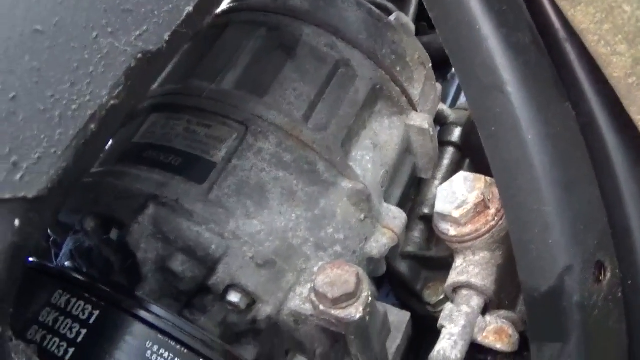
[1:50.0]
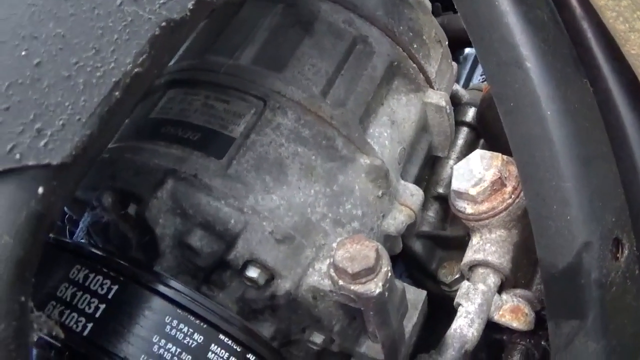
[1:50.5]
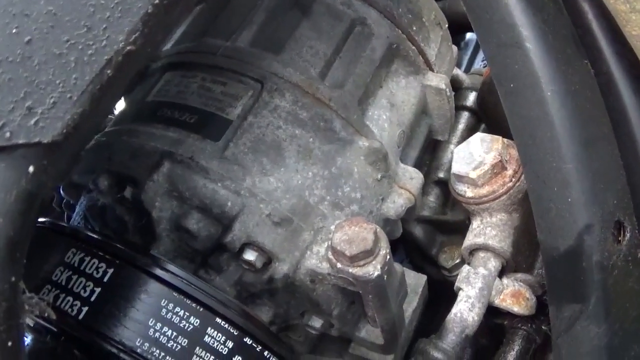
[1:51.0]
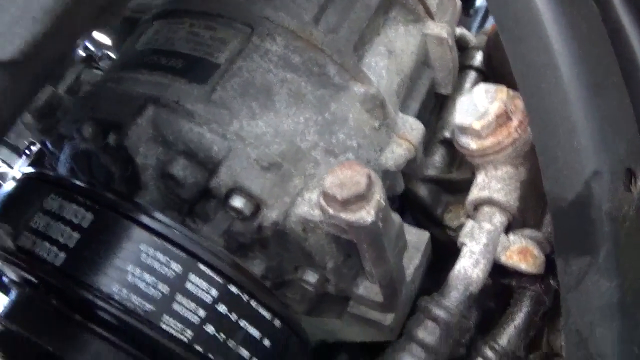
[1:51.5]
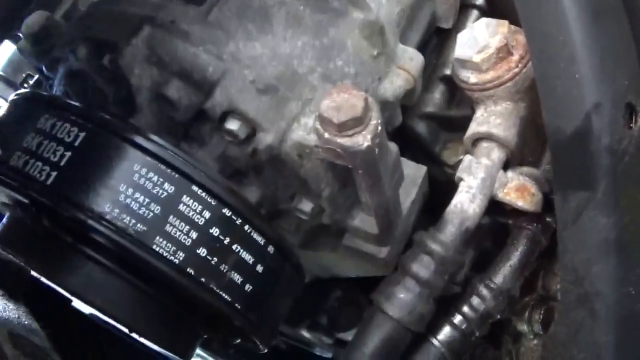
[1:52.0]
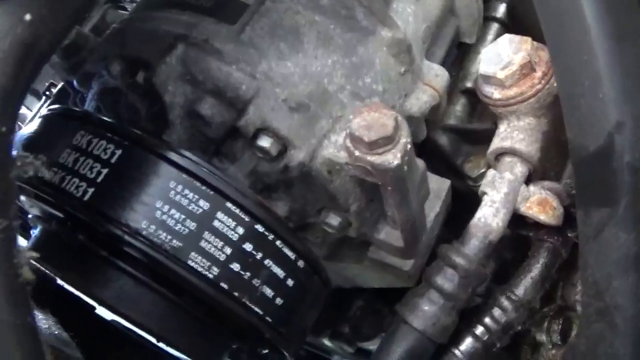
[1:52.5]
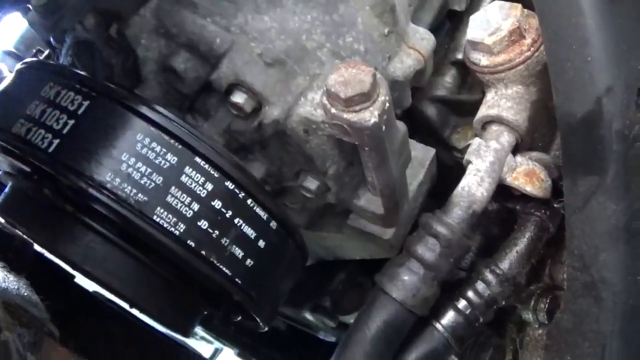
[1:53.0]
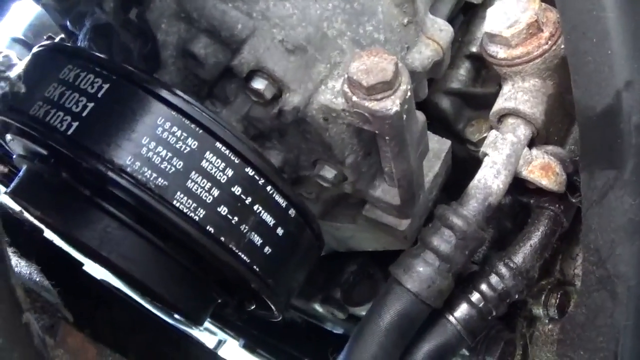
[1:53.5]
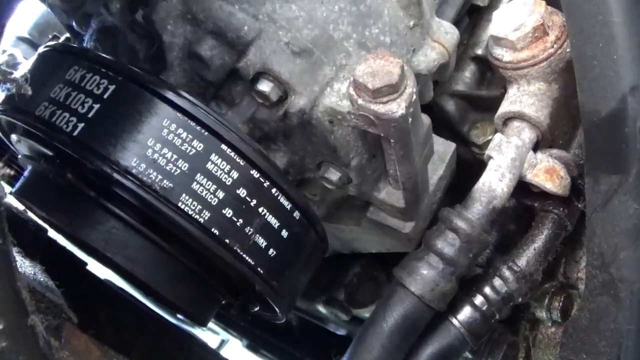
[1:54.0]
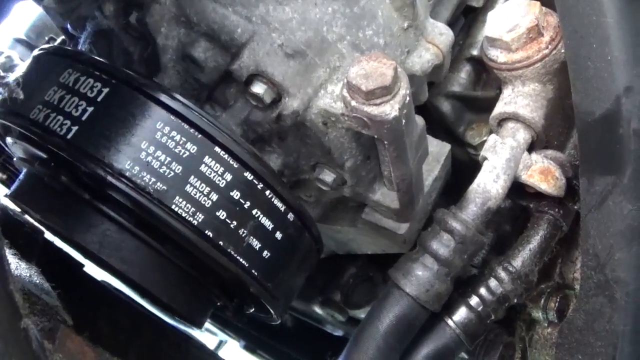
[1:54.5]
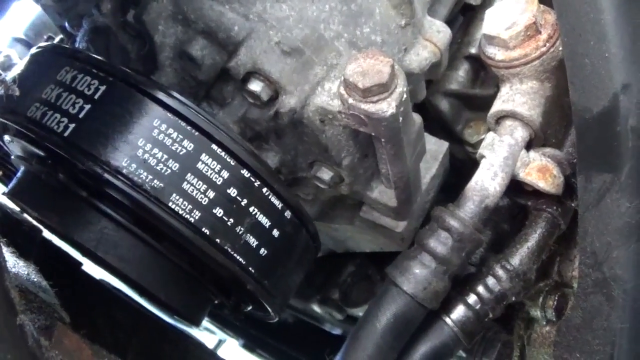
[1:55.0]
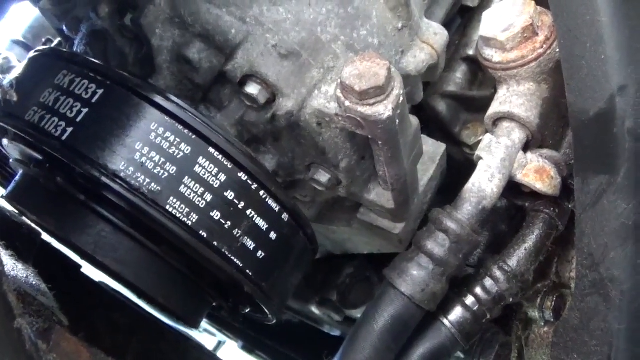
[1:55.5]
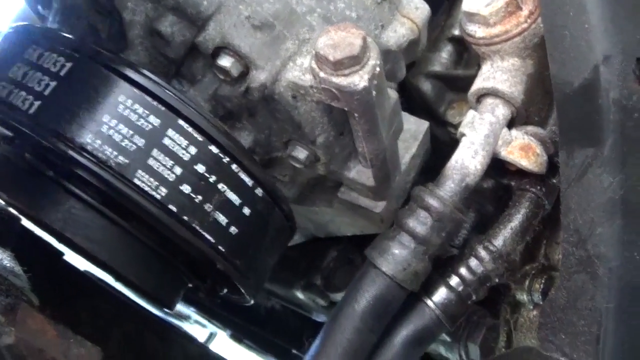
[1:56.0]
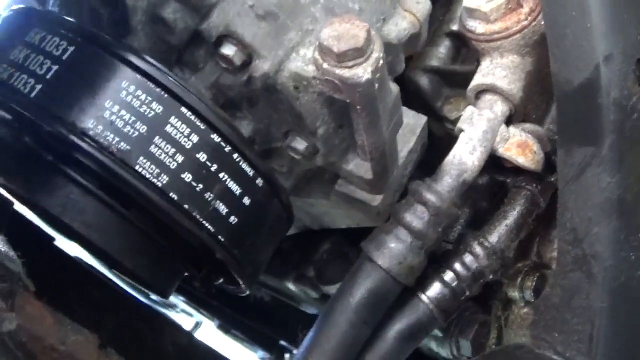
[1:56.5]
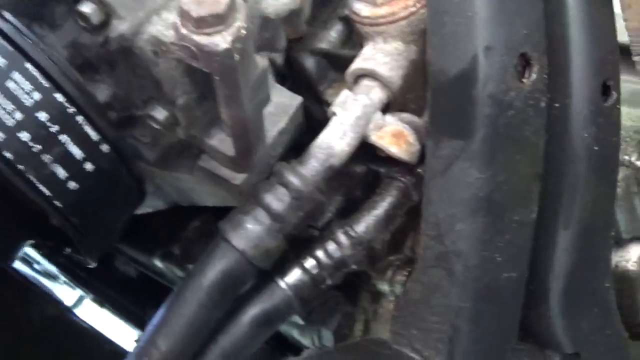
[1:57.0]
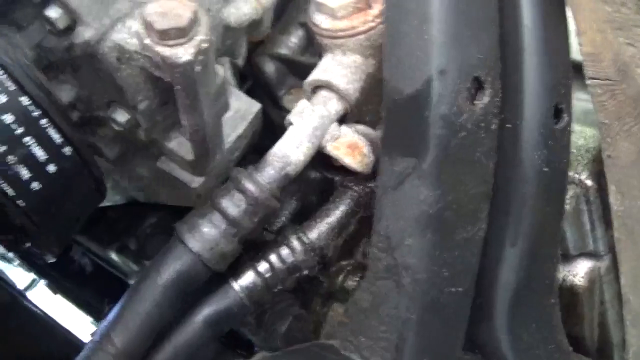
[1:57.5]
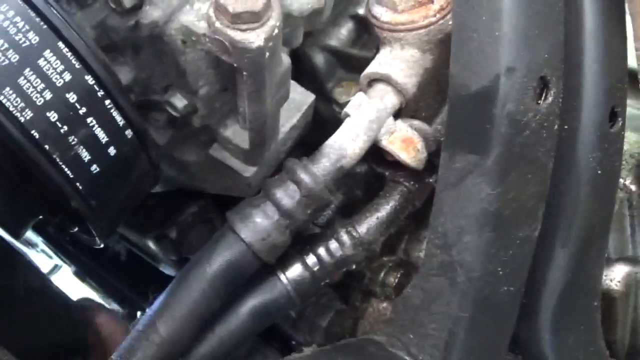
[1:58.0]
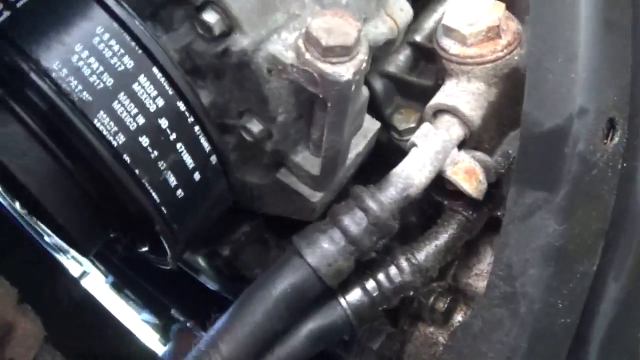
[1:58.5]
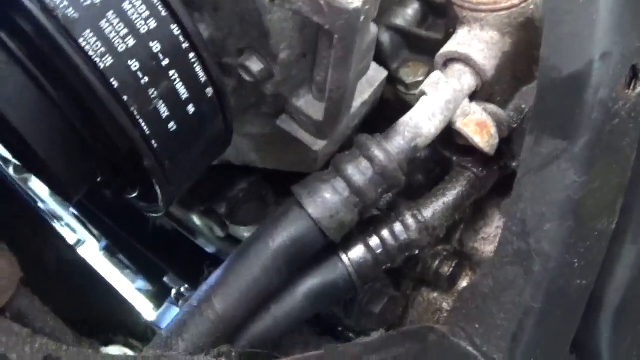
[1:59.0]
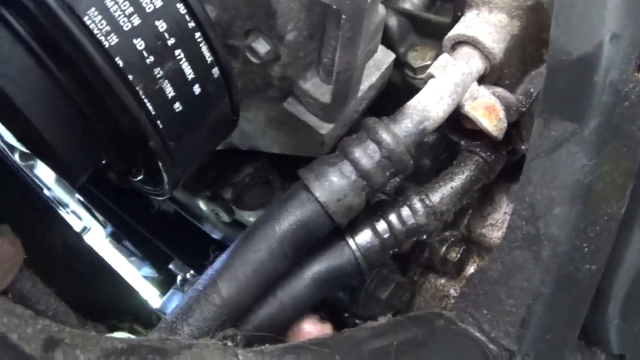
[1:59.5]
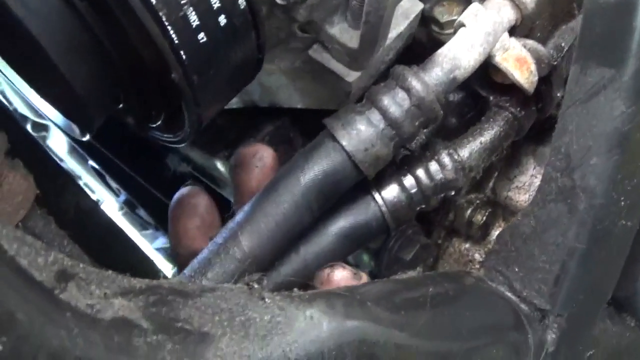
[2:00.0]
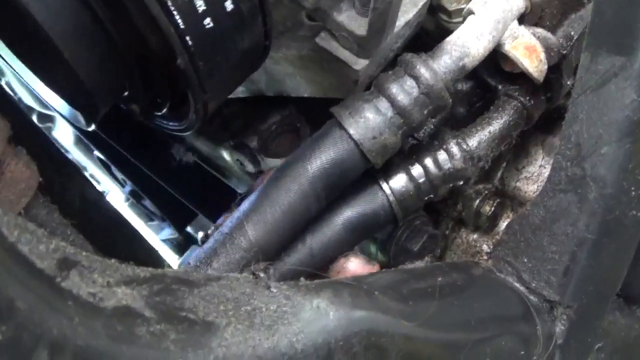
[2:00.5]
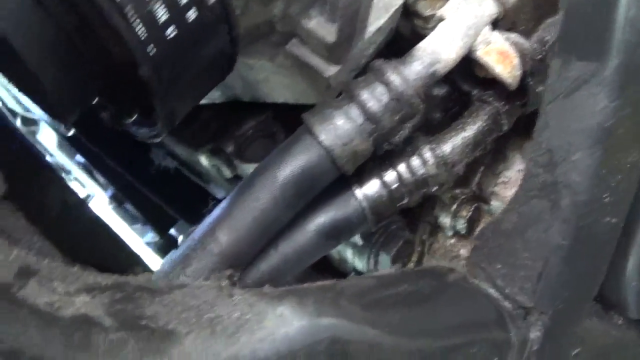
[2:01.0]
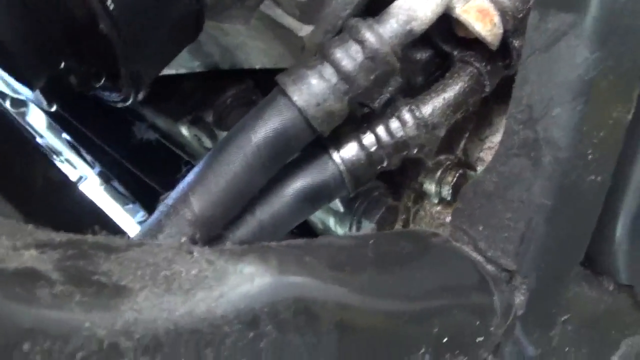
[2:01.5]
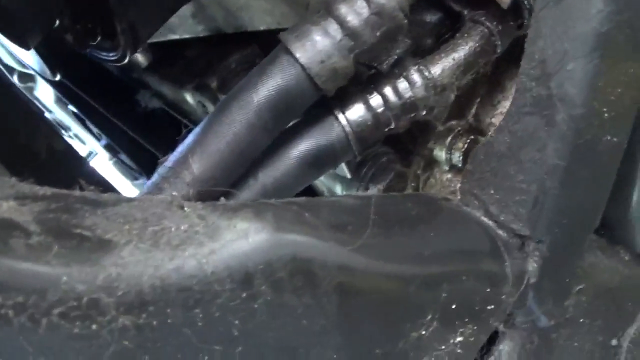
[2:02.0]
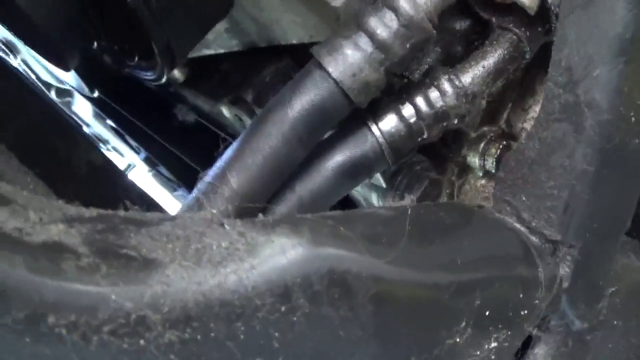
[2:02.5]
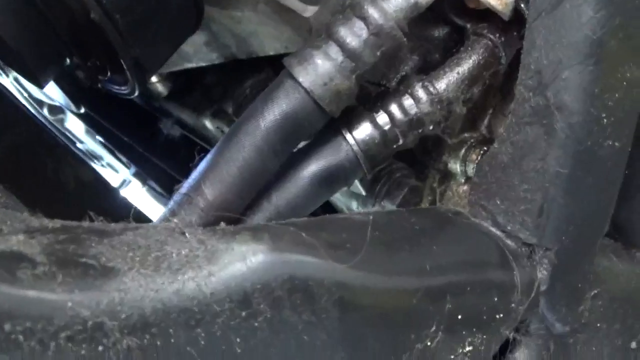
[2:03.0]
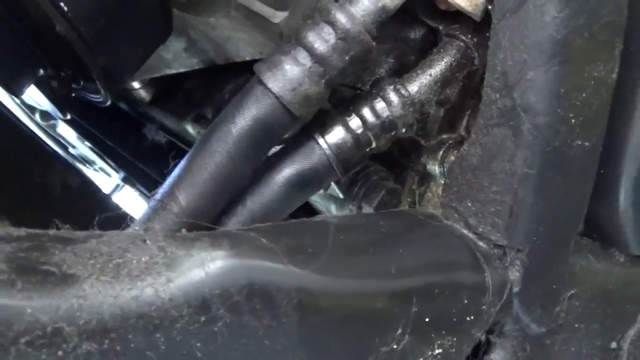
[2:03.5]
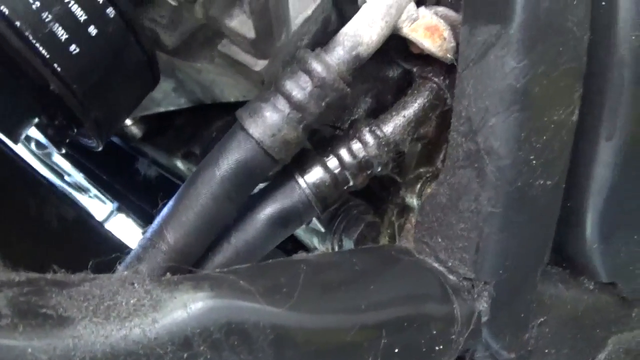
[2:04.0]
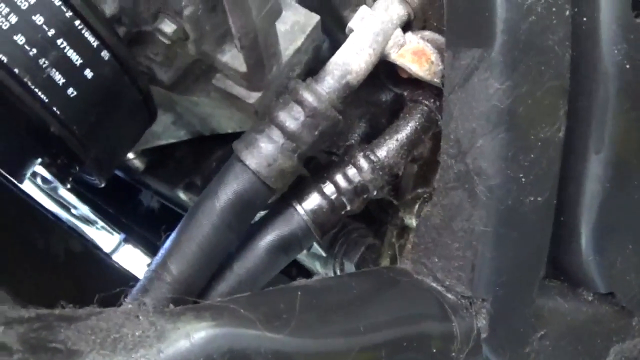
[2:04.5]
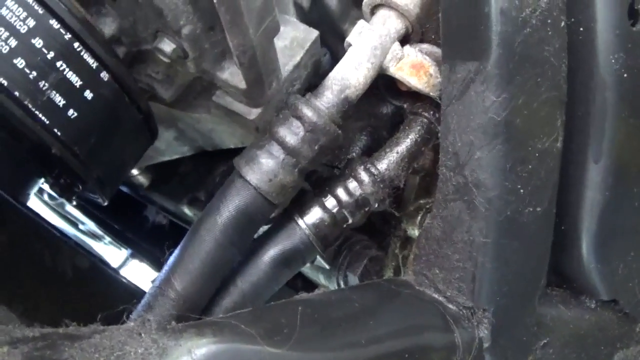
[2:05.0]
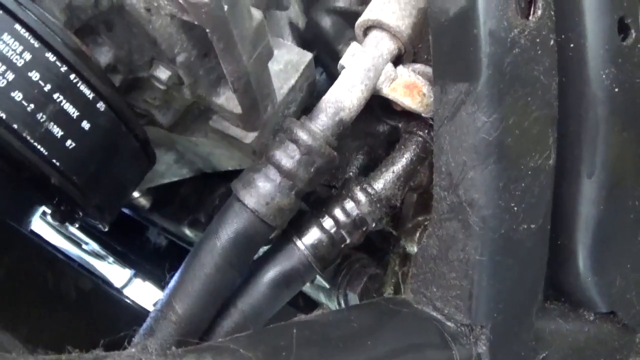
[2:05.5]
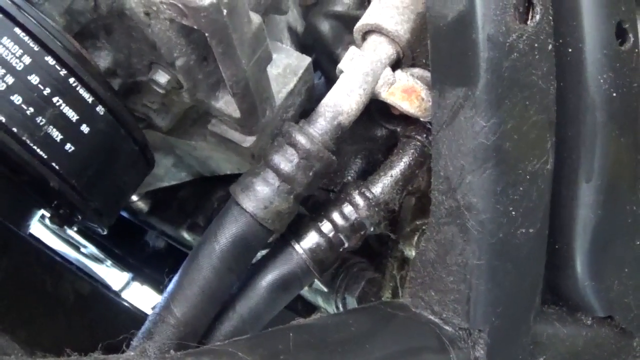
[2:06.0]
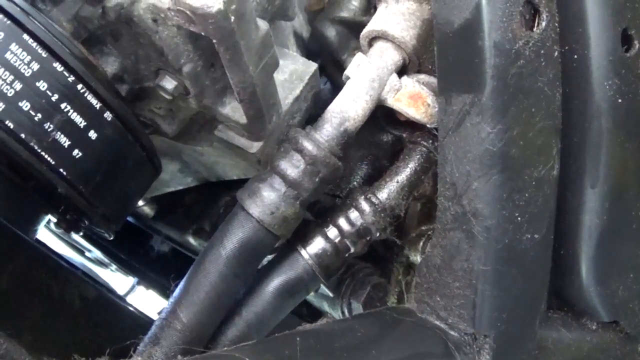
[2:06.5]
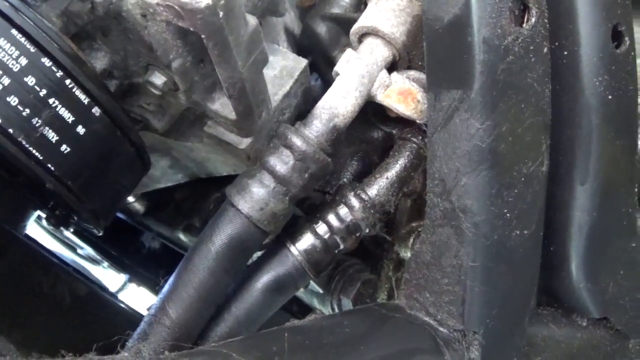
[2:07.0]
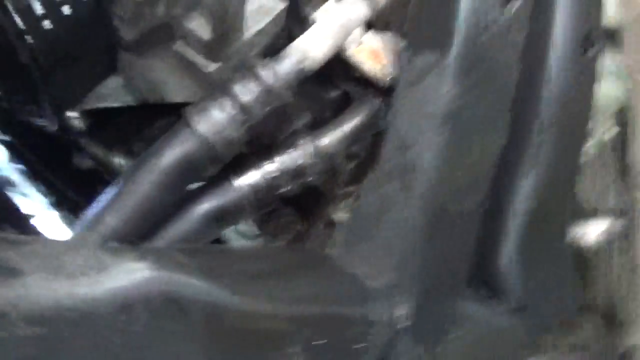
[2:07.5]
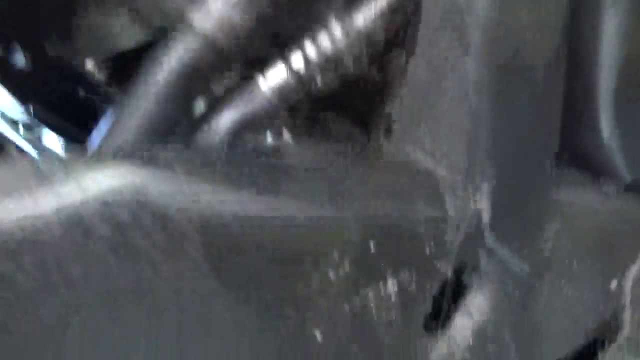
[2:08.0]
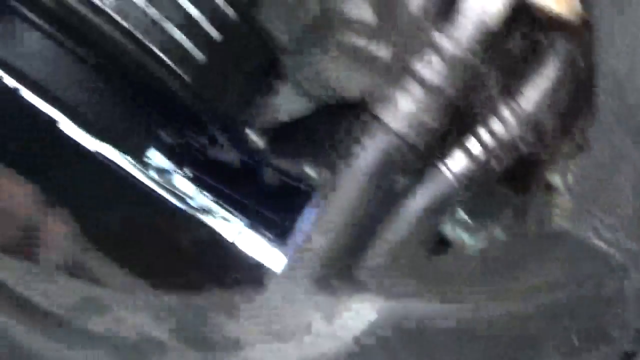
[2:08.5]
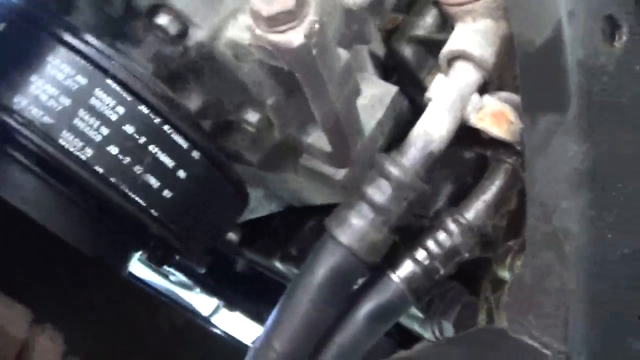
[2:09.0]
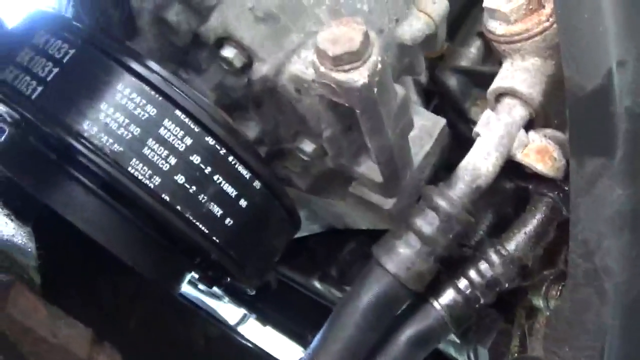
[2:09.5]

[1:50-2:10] The camera points up through the engine from underneath, showing a motor and driveshaft with a belt on it. The individual's hand points to some tubing up in the motor assembly. The camera is shaky.